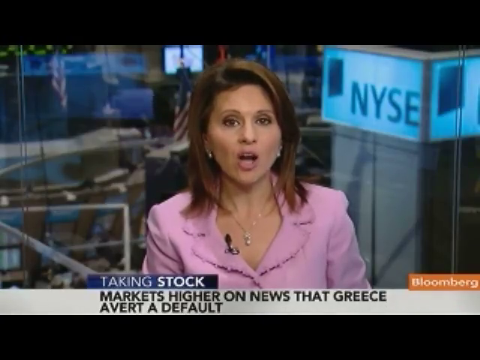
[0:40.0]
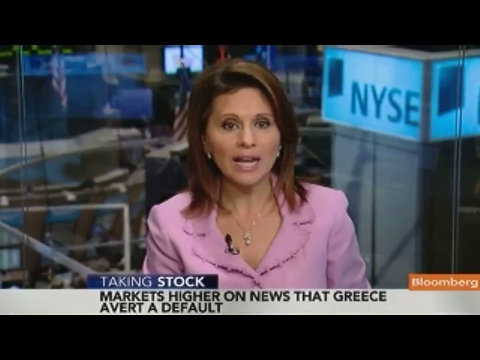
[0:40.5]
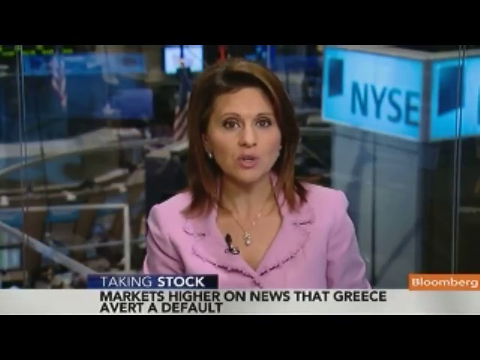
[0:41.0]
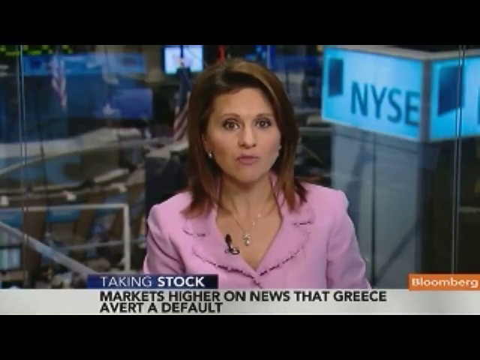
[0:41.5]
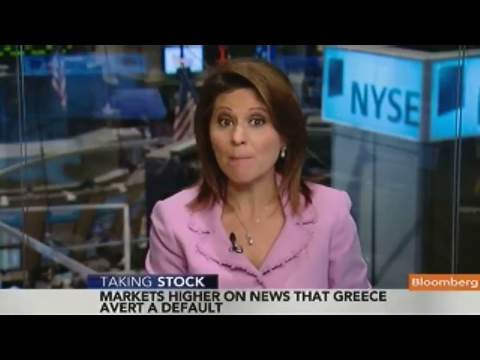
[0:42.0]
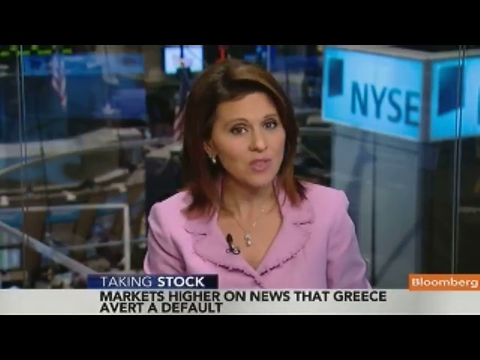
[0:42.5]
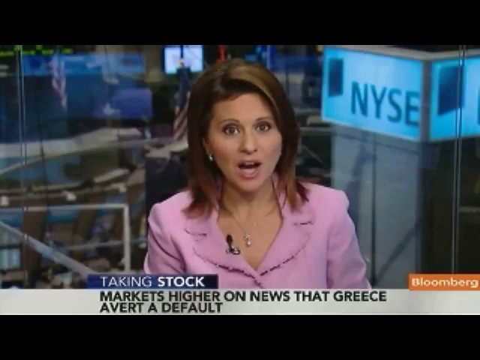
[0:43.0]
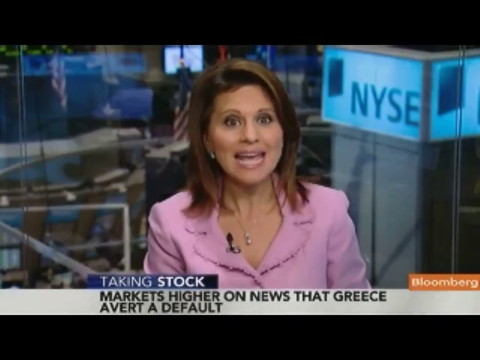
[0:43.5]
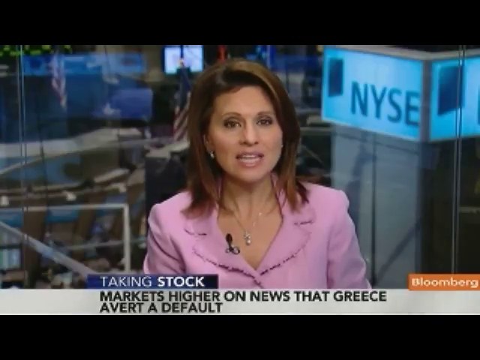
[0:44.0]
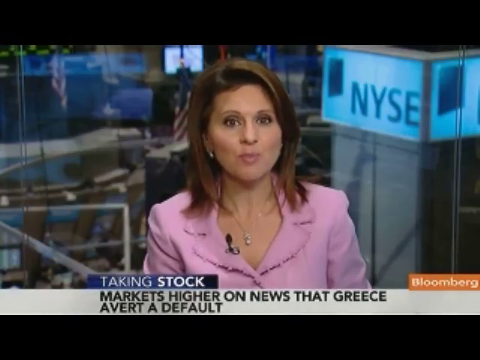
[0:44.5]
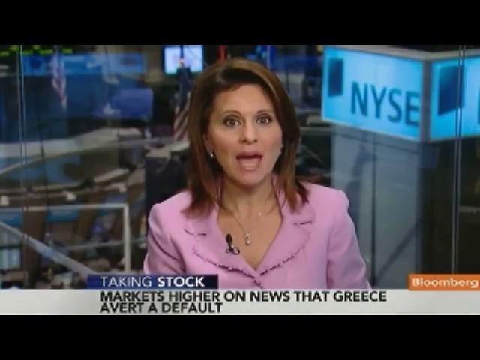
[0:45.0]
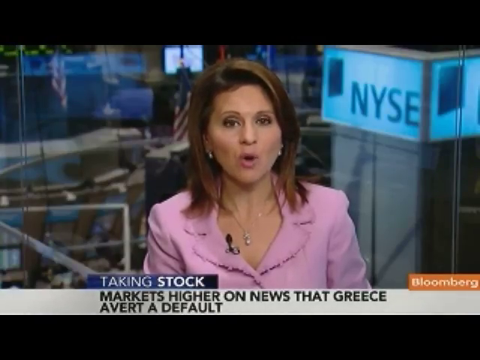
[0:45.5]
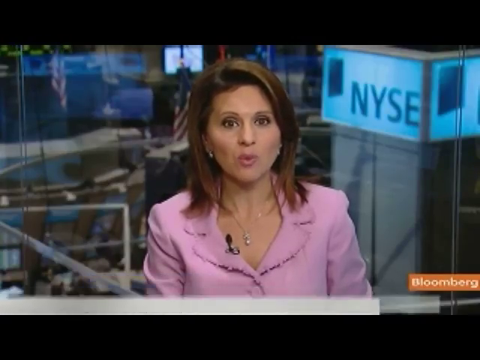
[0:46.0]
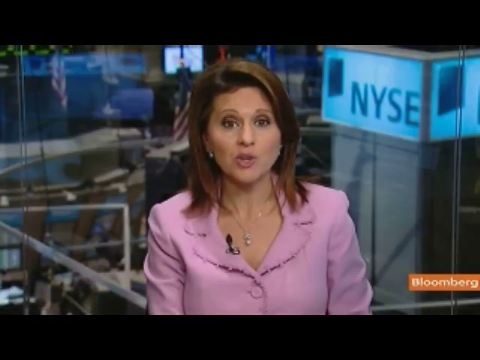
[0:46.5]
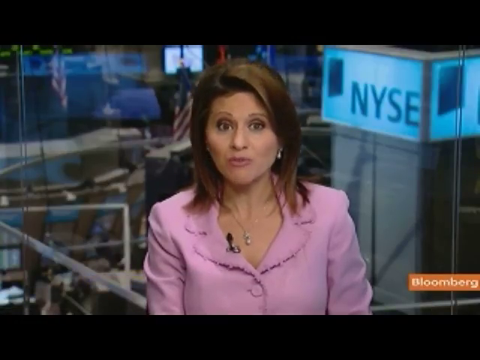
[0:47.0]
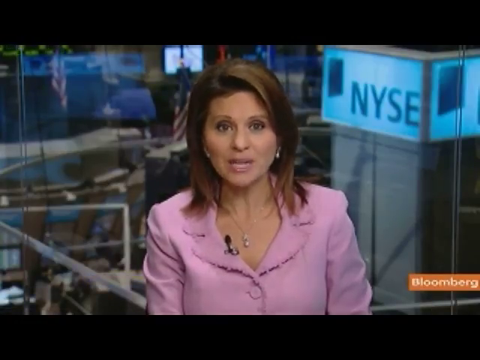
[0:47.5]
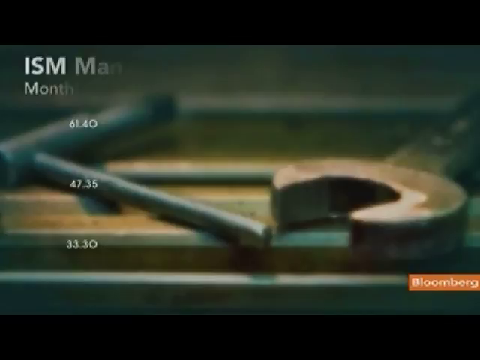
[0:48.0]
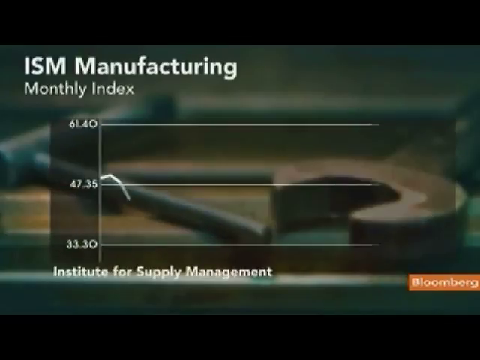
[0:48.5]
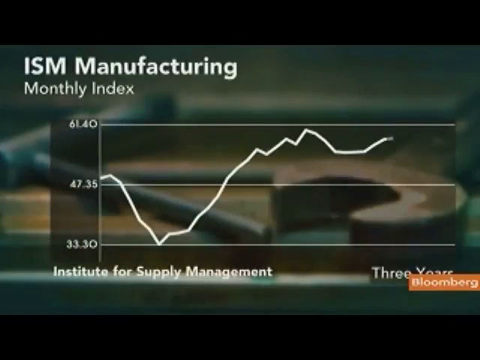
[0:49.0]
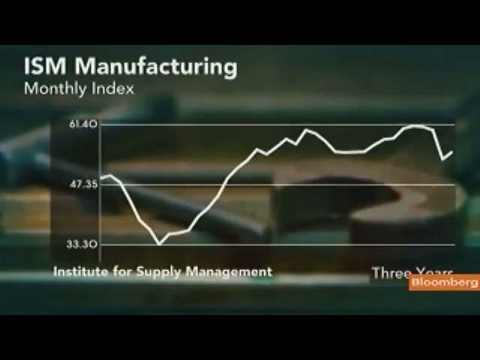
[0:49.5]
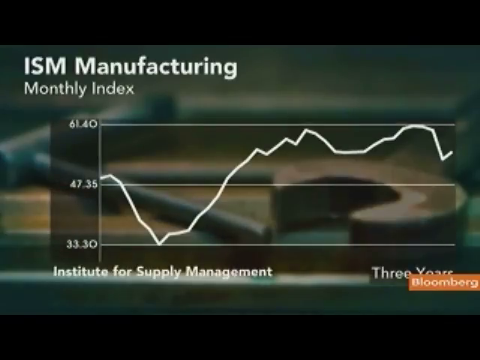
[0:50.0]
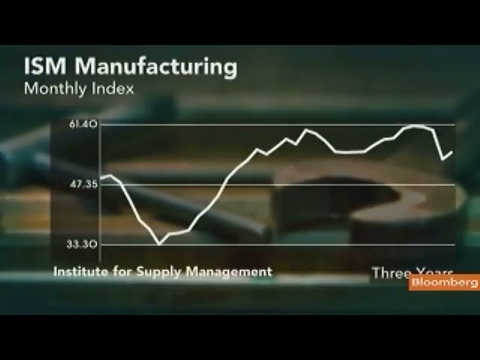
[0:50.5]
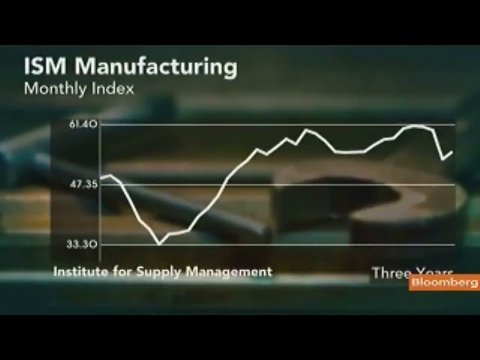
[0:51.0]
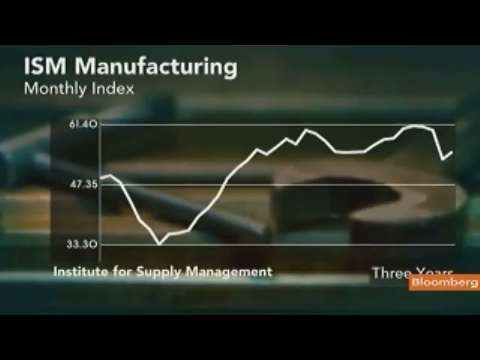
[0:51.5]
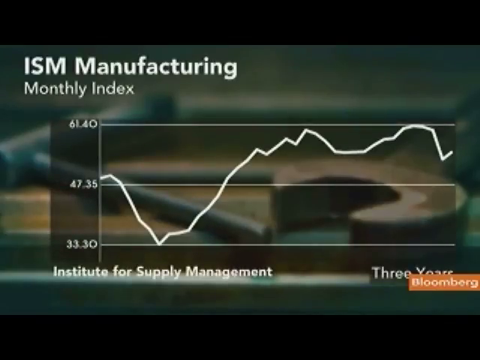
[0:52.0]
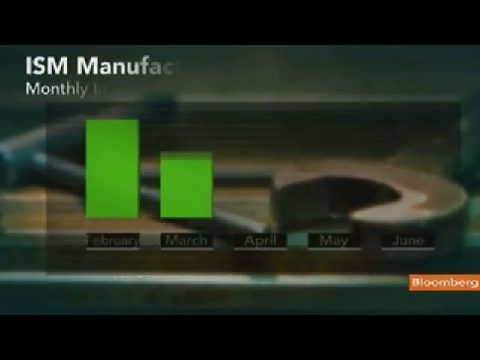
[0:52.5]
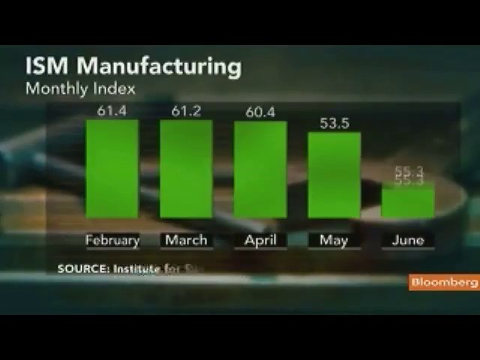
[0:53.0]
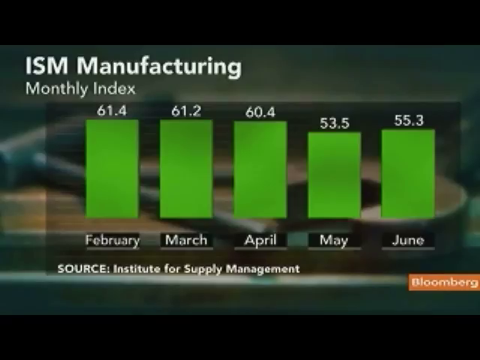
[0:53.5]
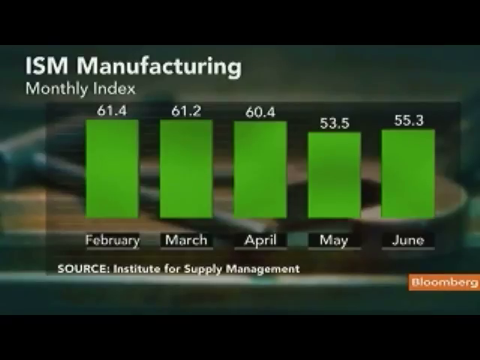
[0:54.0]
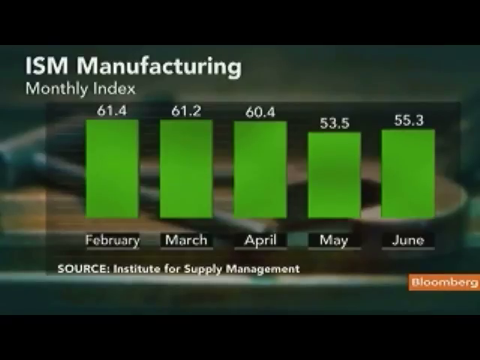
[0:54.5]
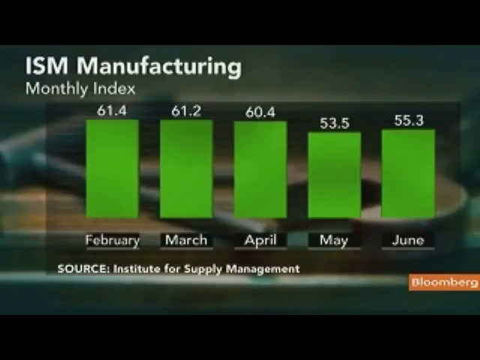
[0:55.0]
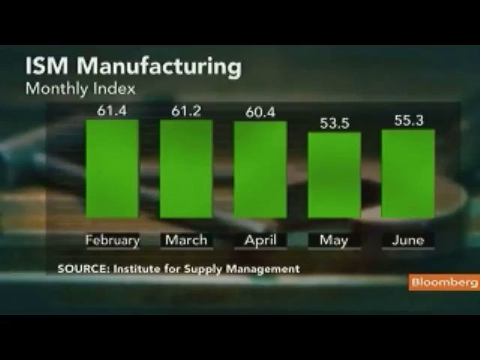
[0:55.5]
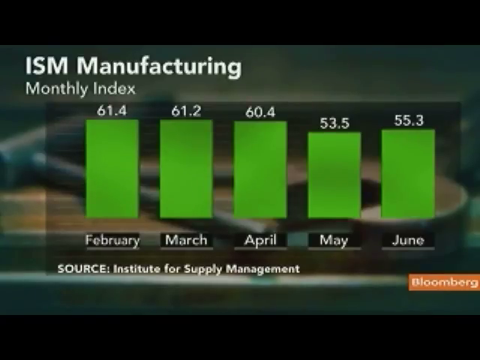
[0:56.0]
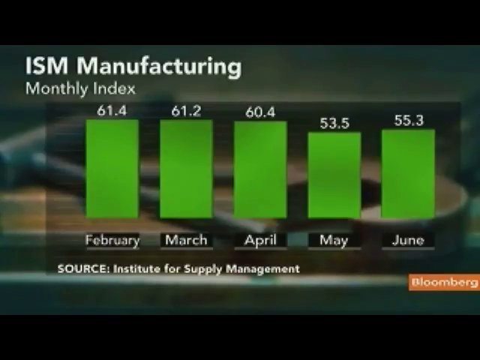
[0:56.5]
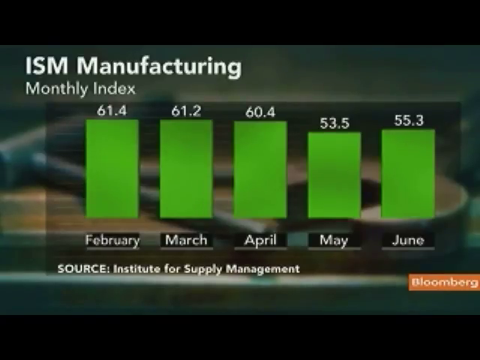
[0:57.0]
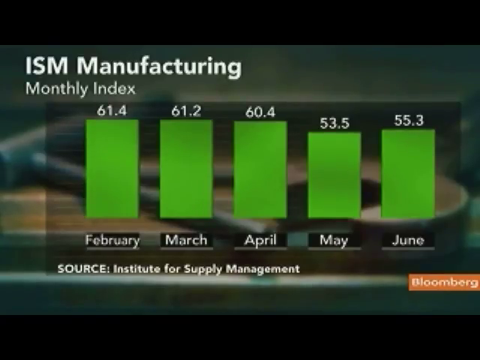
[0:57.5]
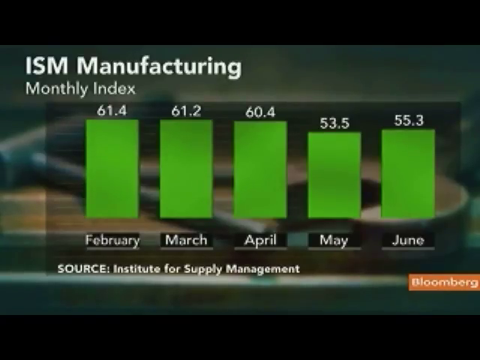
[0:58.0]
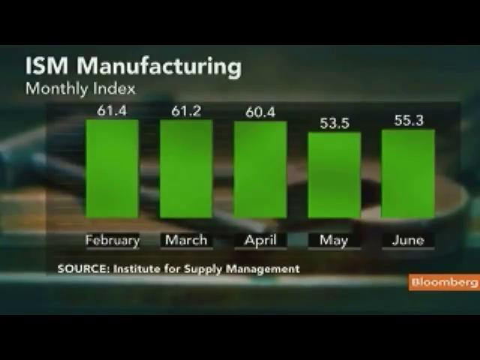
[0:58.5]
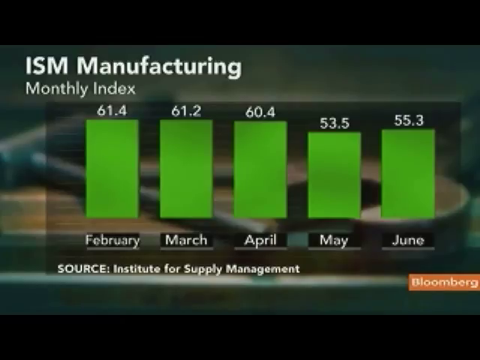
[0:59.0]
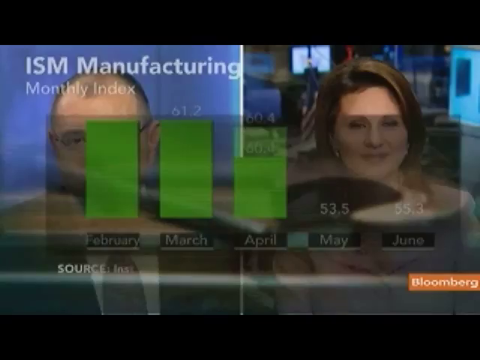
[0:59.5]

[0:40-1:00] A female reporter in a long-sleeve pink outfit talks, with a microphone attached to her lapel, a necklace, earrings and brown hair. Behind her is the New York Stock Exchange NYSE logo on a pole. At the bottom of the screen the text reads "taking stock" and below it "markets higher on news that Greece avert a default." The reporter shakes her head back and forth and keeps talking. The text then disappears, replaced by a graphic reading "ISM Manufacturing" with "monthly index" below it. On the left are the values 33.30, 47.35 above that, and 61.40 above that. The line starts at about 47, drops to 33, then goes all the way up to 61; the graphic covers three years and is put out by the Institute for Supply and Management. Next, a bar graph shows the months February through June, headed "ISM Manufacturing monthly index," with percentages for each month: 61.4 for February, 61.2 for March, 60.4 for April, 53.5 for May and 55.3 for June.